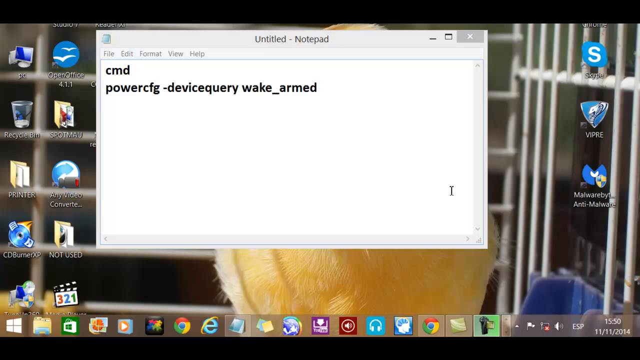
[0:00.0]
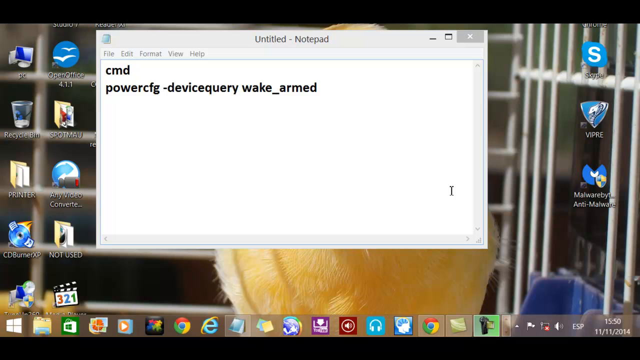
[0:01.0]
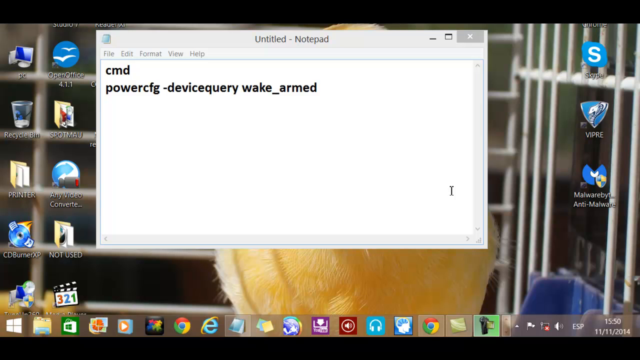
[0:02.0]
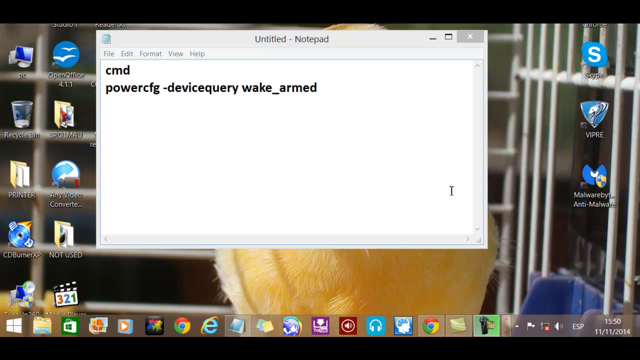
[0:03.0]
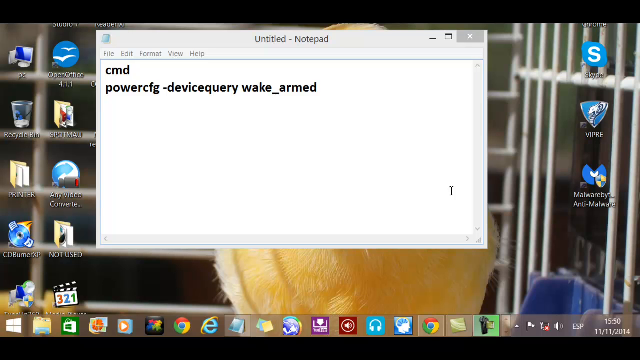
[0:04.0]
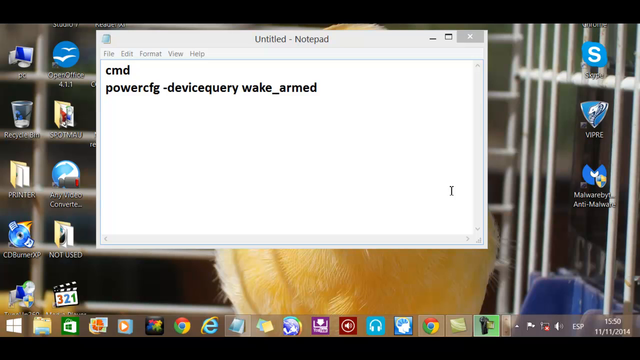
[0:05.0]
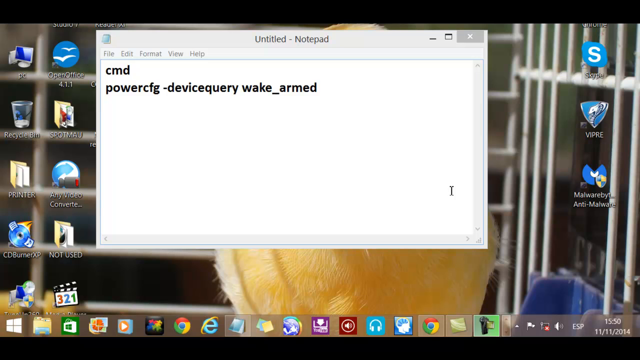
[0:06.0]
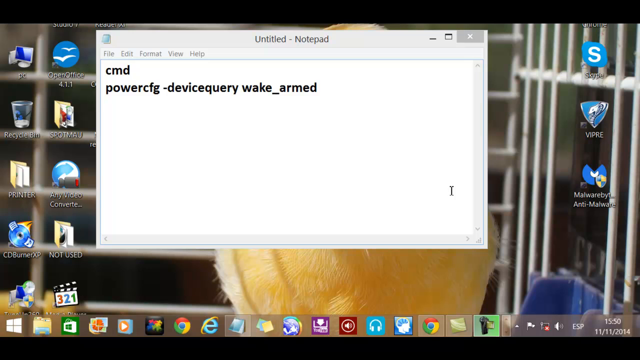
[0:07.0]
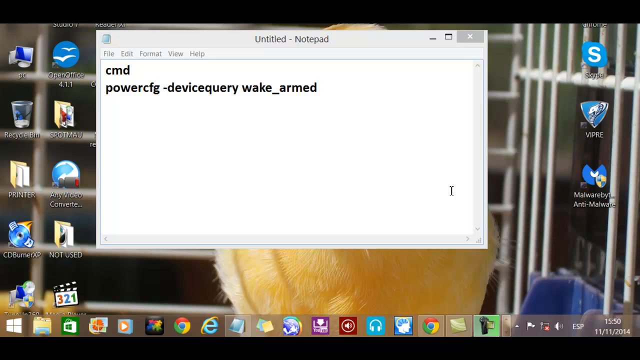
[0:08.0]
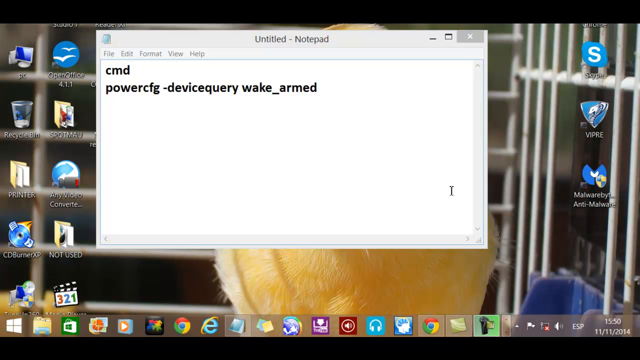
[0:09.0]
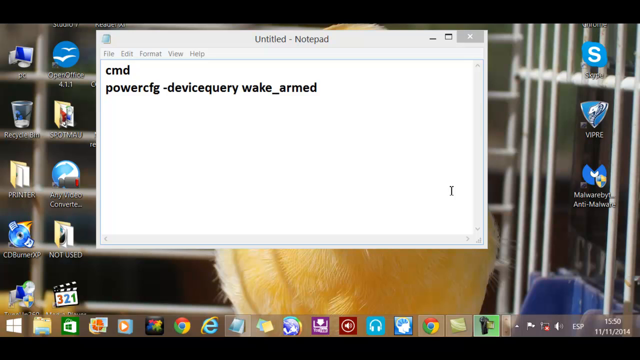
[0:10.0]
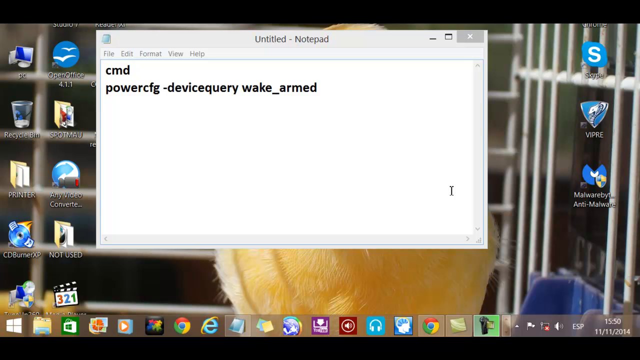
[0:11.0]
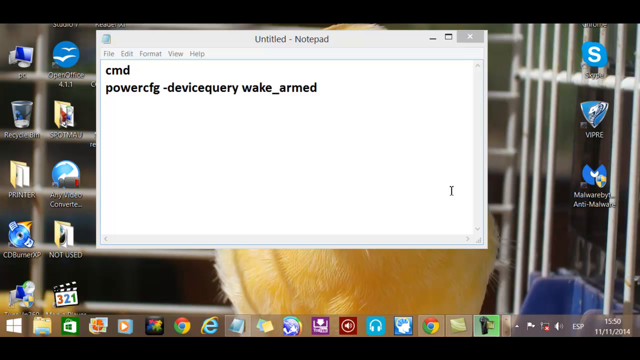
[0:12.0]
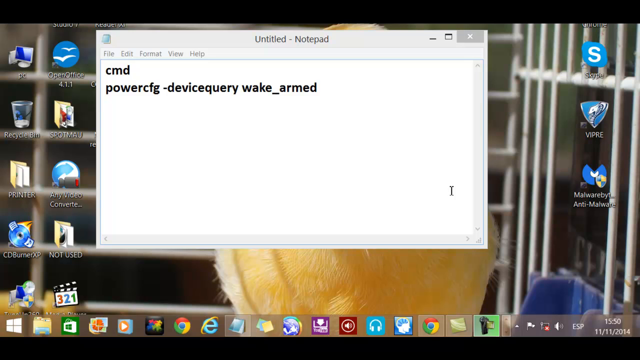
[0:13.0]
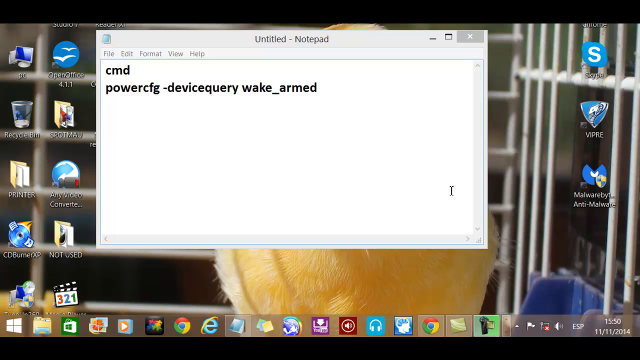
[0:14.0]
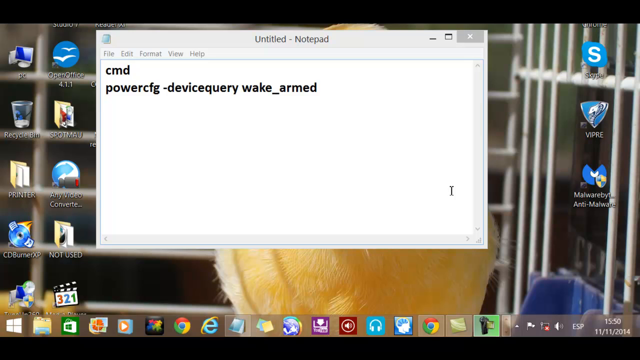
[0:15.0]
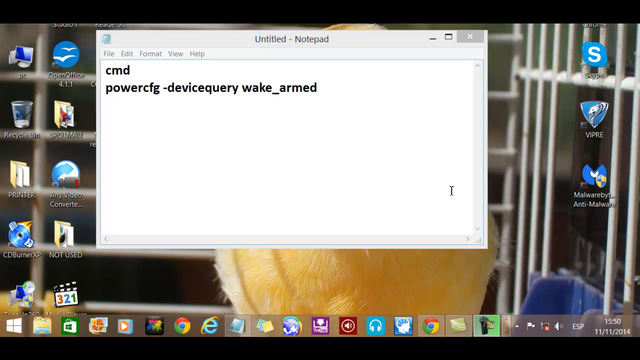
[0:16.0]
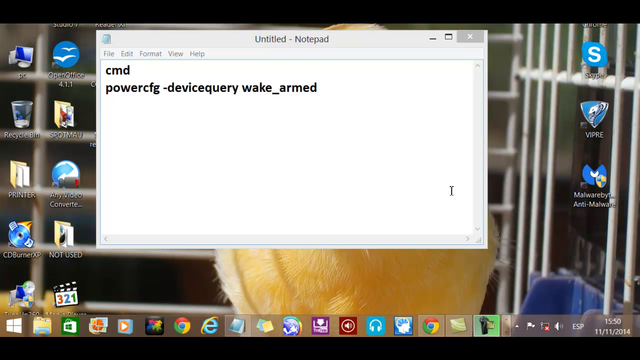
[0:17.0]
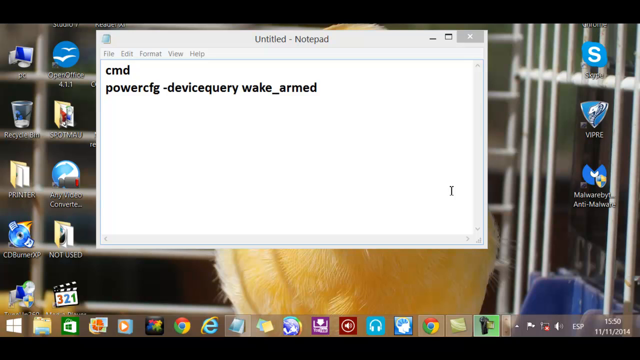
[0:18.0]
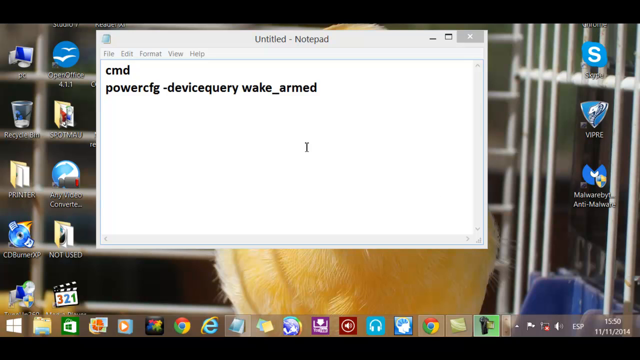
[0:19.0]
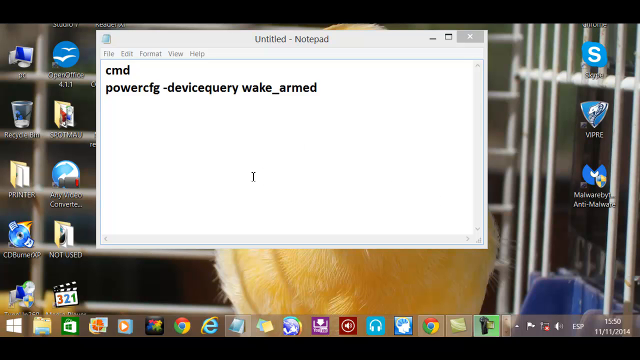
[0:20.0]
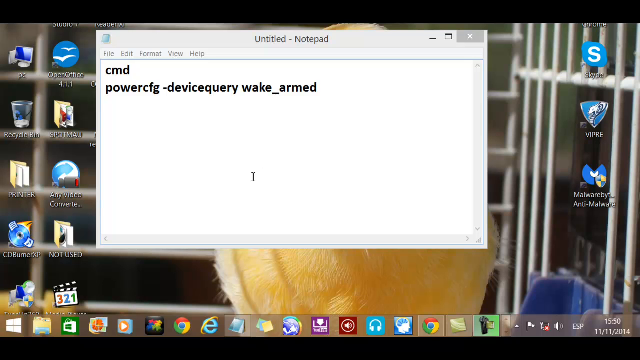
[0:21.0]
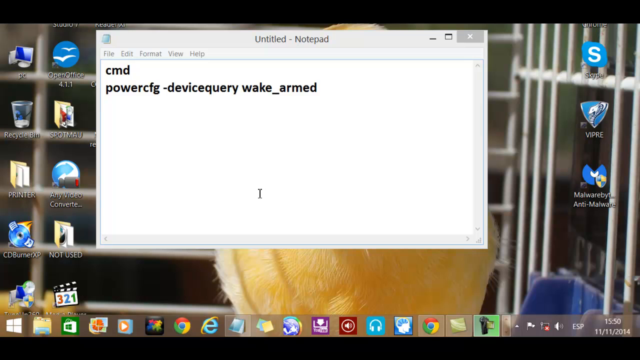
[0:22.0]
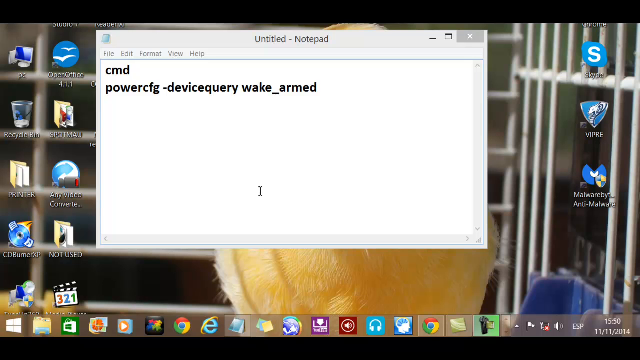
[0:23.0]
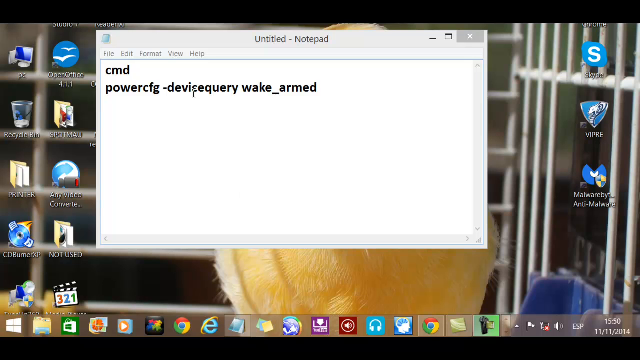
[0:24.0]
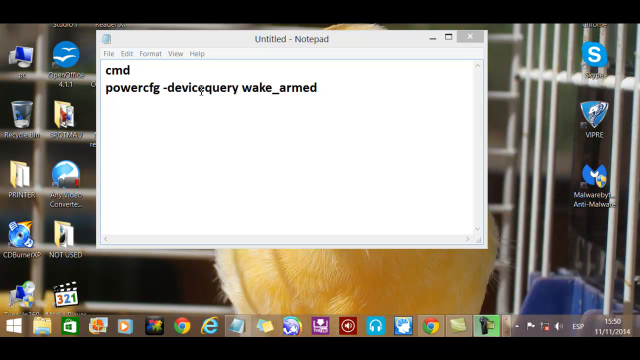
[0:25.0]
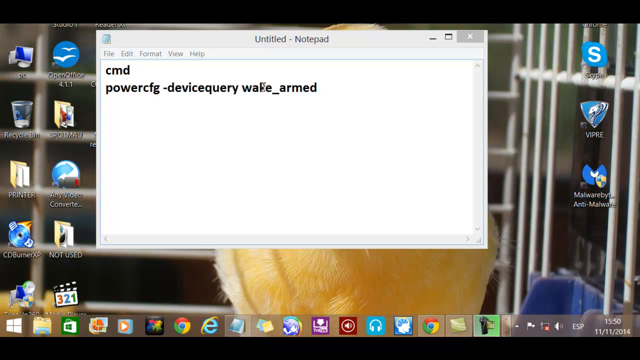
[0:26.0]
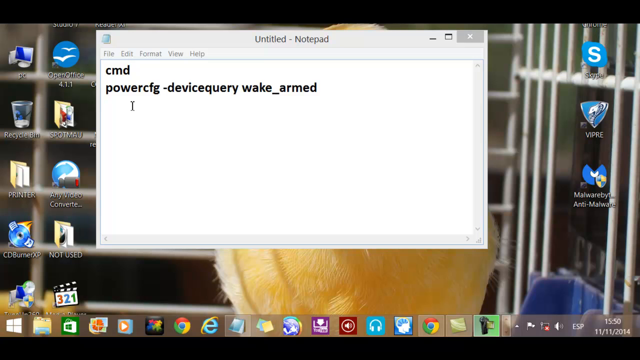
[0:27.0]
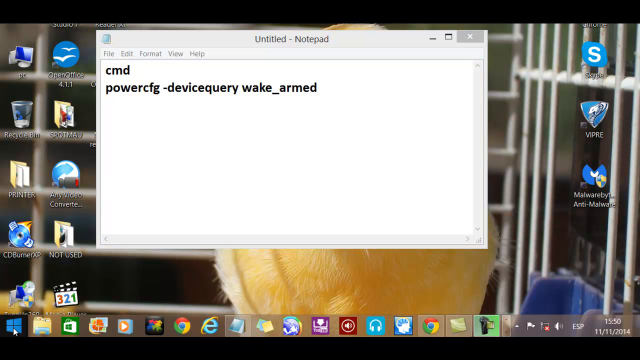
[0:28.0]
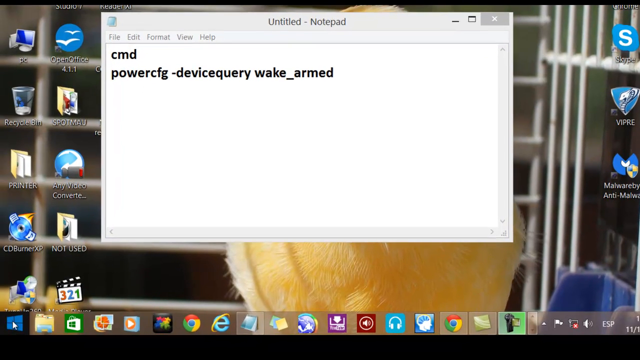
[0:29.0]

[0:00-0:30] A screen capture shows somebody's desktop with many icons along the bottom, and the wallpaper appears to be a yellow duck. An untitled notepad window is open with some sort of command prompt typed into it. There are many icons on the desktop on the left and right of the screen. The cursor is not highlighted. The untitled notepad window is directly in the center, taking up most of the screen, making it the main focal point. It is bright white with just this one command prompt text written out inside it. At one moment the start bar is opened.